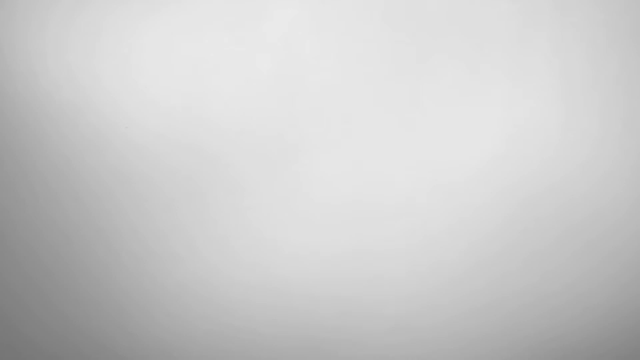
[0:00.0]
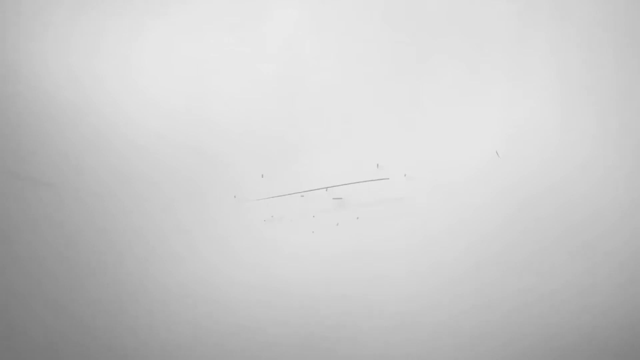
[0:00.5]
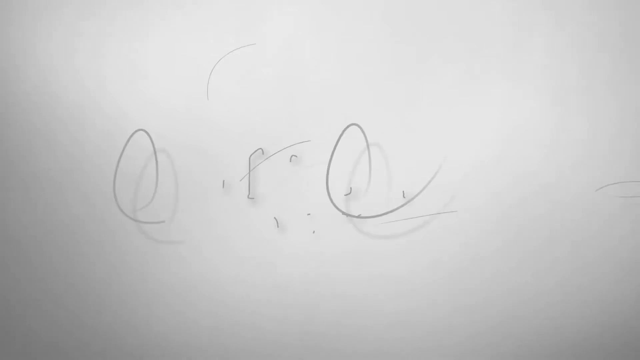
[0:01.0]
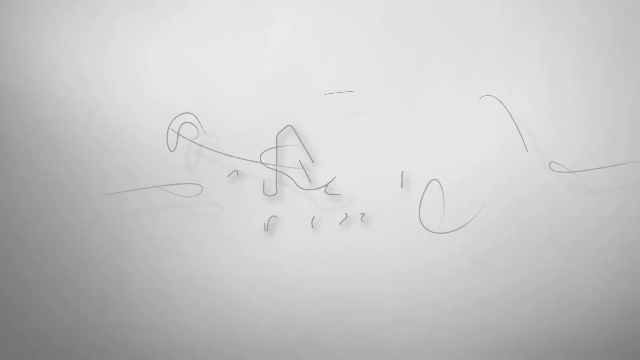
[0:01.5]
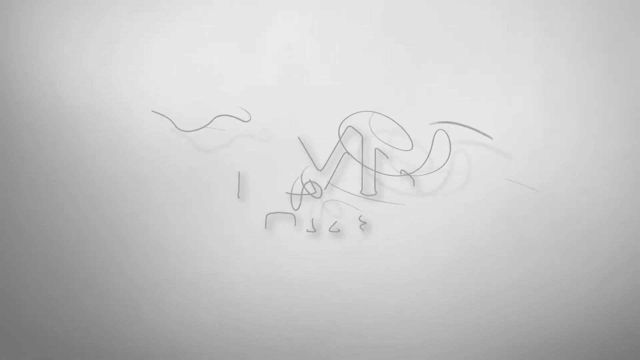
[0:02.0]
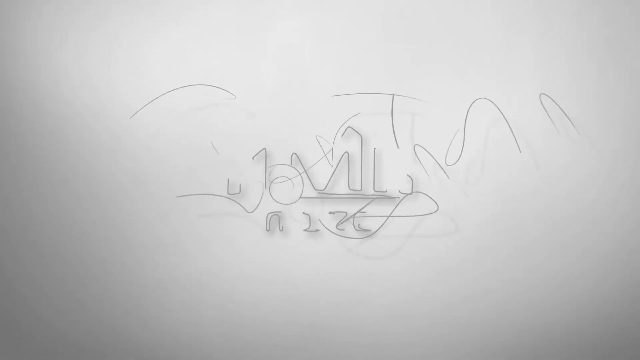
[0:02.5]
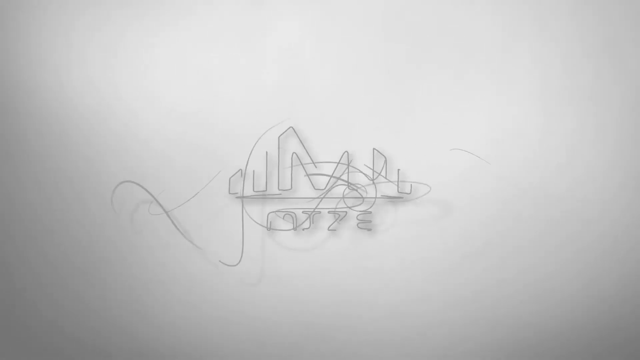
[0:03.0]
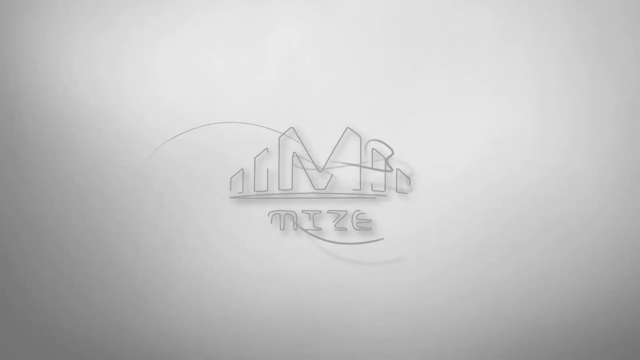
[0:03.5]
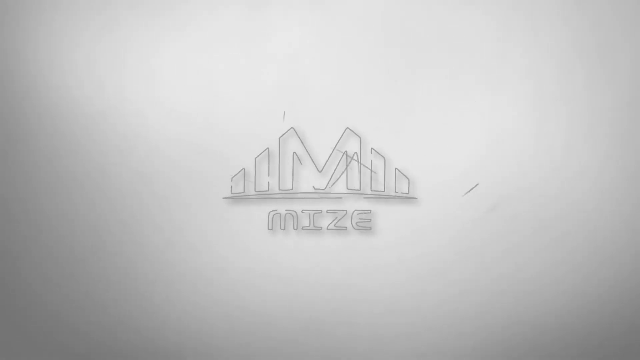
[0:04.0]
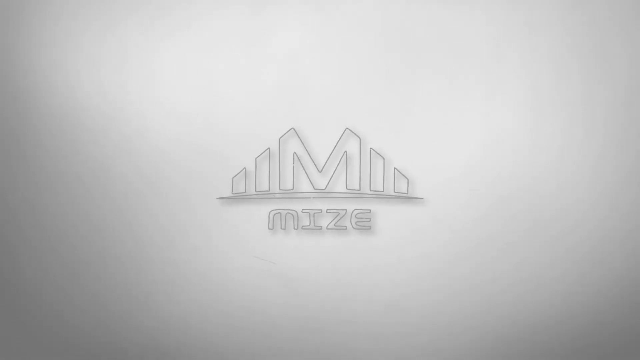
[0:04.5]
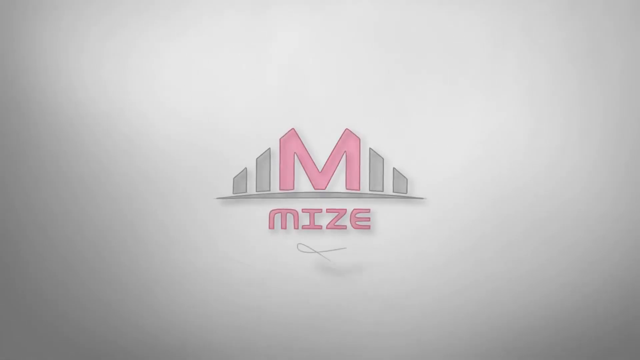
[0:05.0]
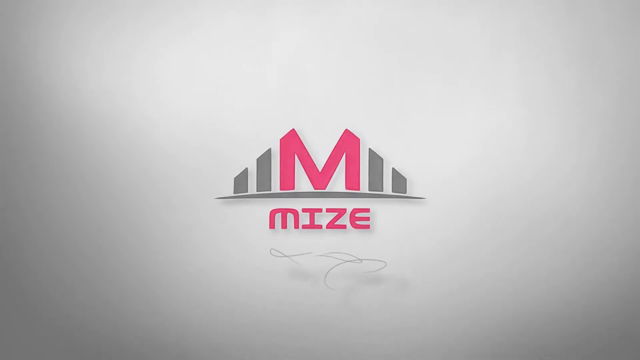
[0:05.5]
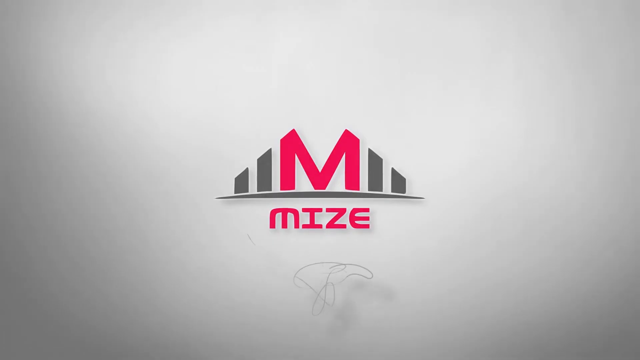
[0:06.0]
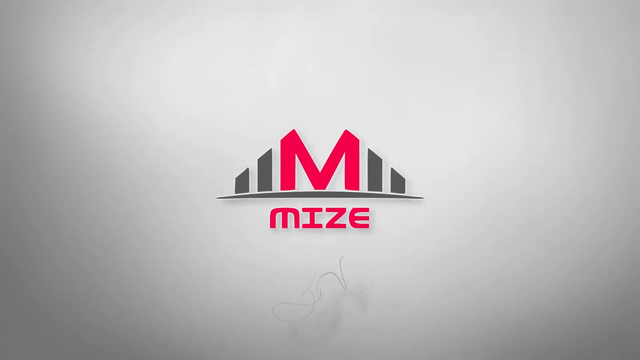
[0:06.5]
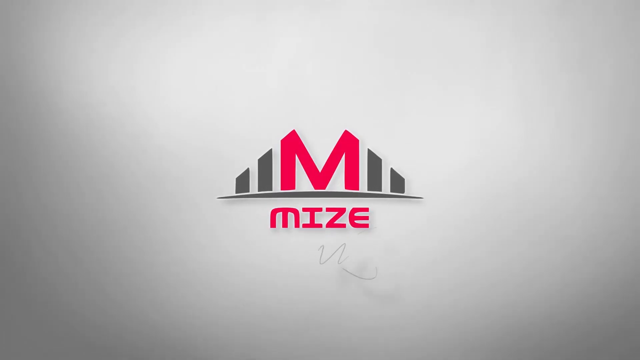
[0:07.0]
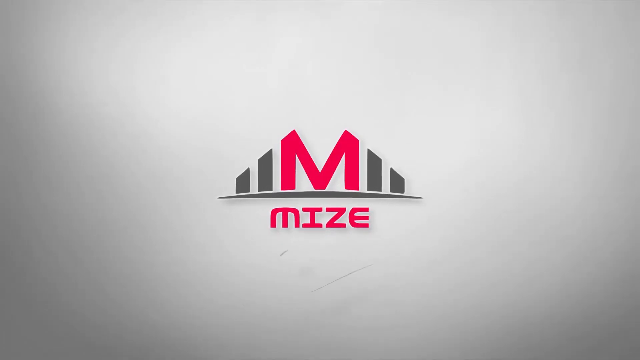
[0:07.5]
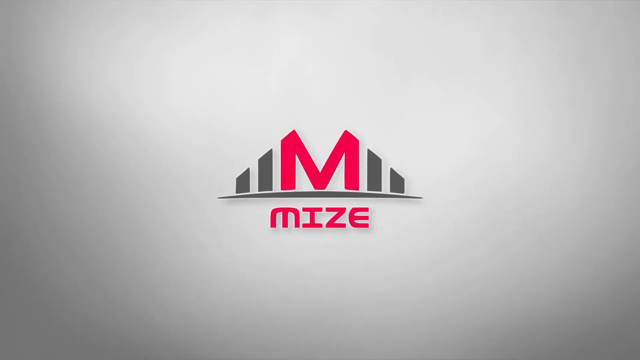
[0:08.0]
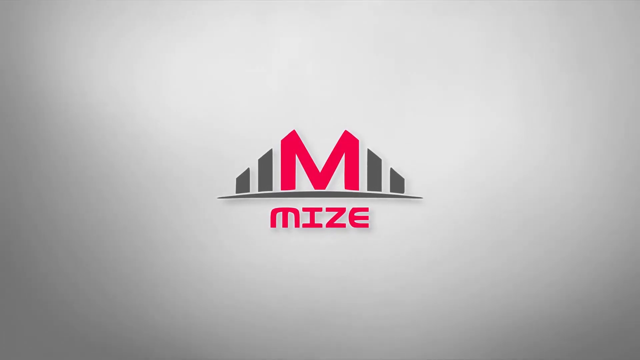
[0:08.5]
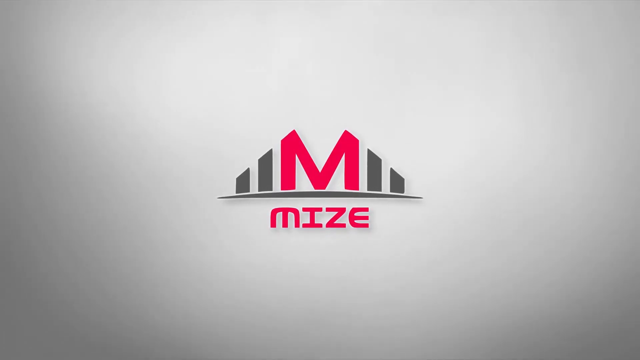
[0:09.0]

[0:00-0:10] Many lines appear on screen and then turn into a logo. A small part of a bird is visible.